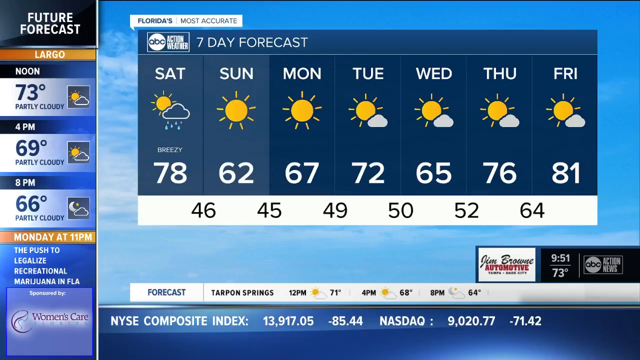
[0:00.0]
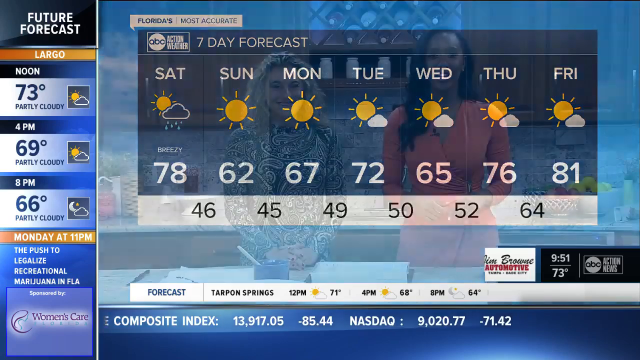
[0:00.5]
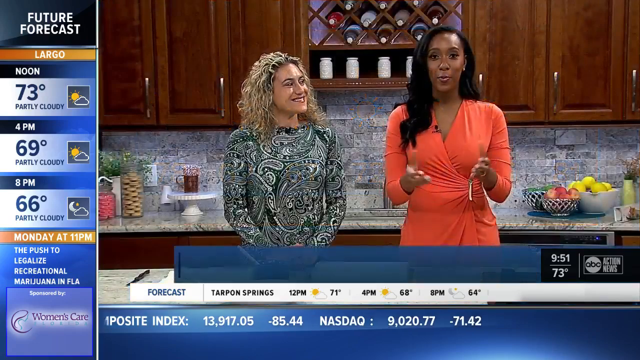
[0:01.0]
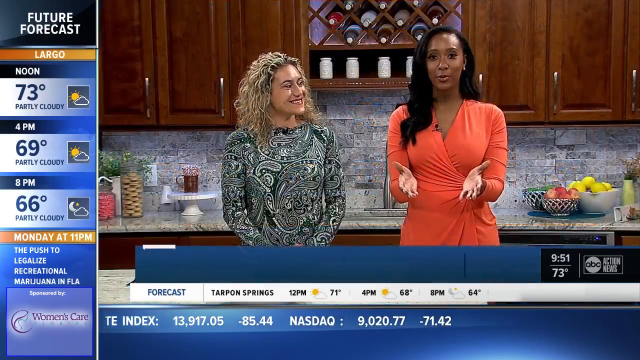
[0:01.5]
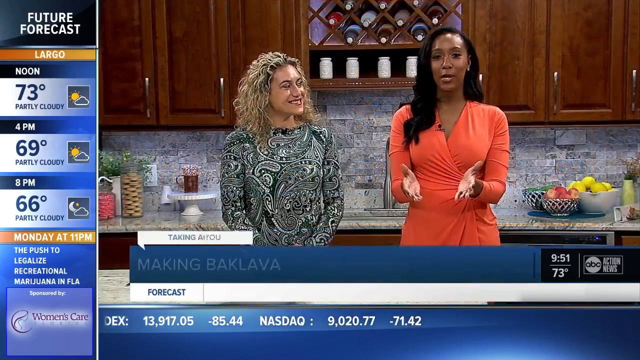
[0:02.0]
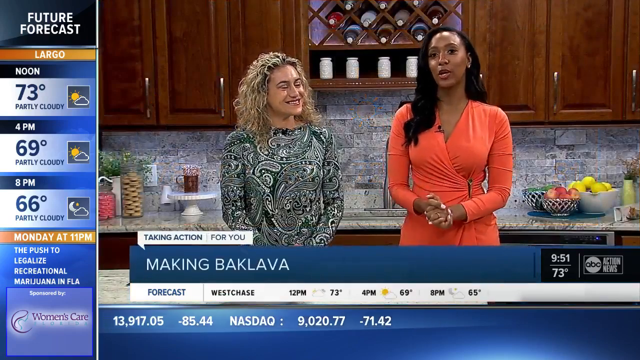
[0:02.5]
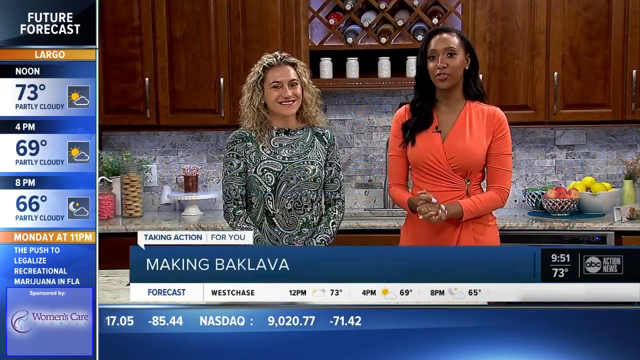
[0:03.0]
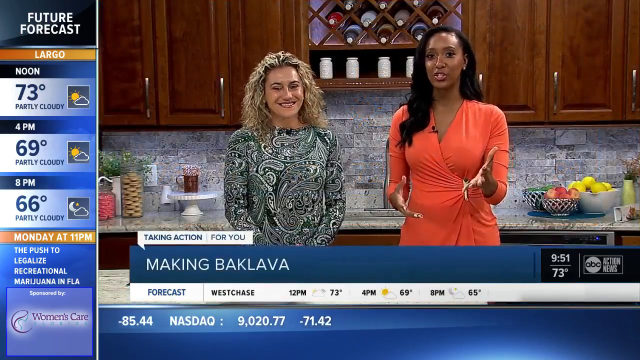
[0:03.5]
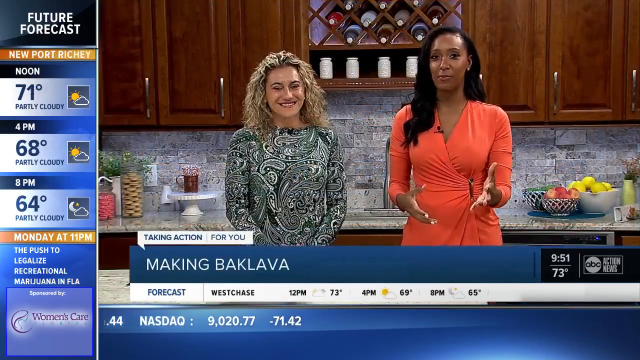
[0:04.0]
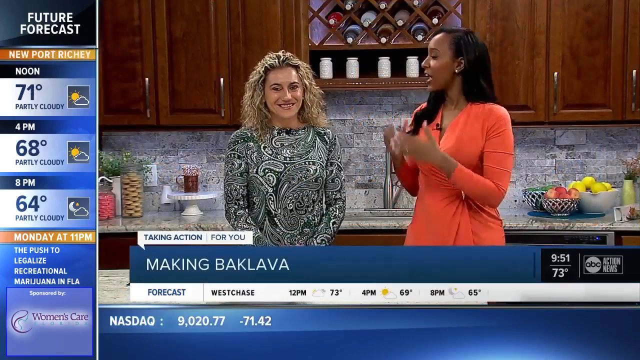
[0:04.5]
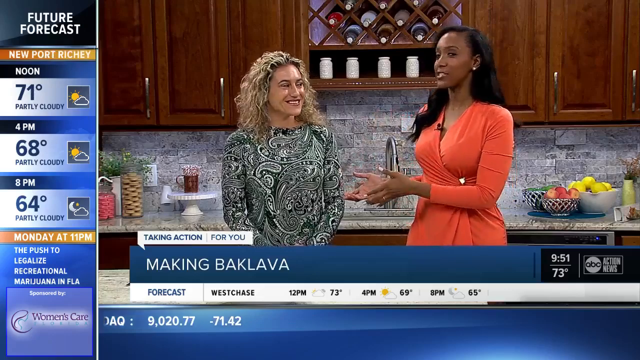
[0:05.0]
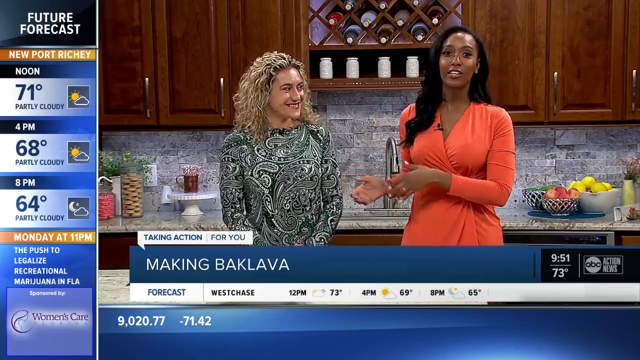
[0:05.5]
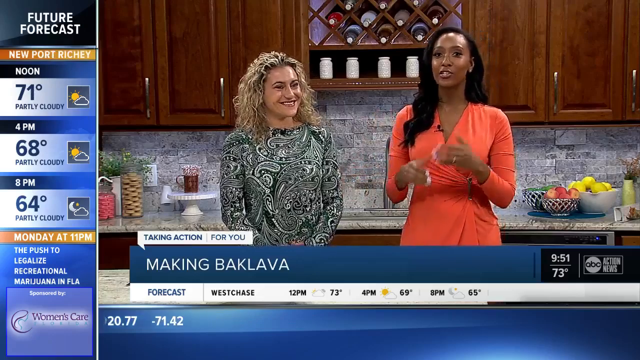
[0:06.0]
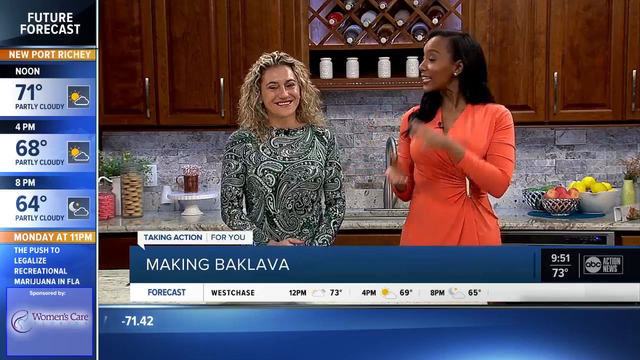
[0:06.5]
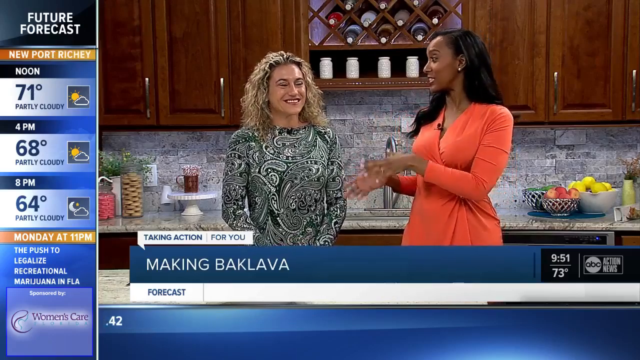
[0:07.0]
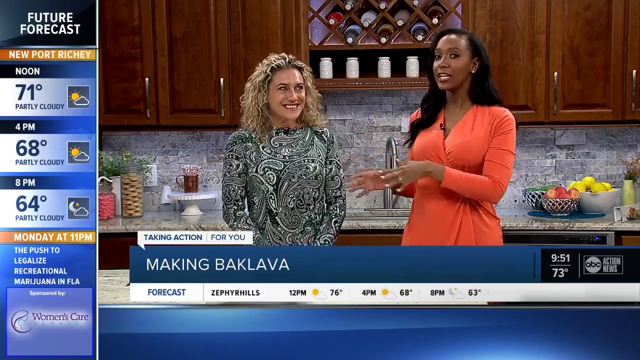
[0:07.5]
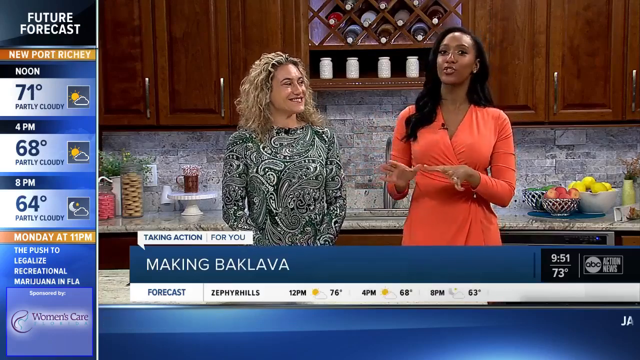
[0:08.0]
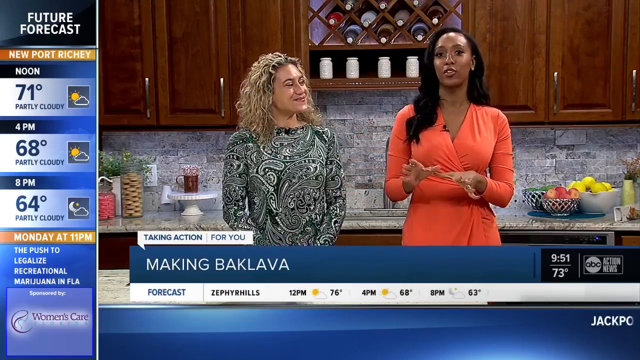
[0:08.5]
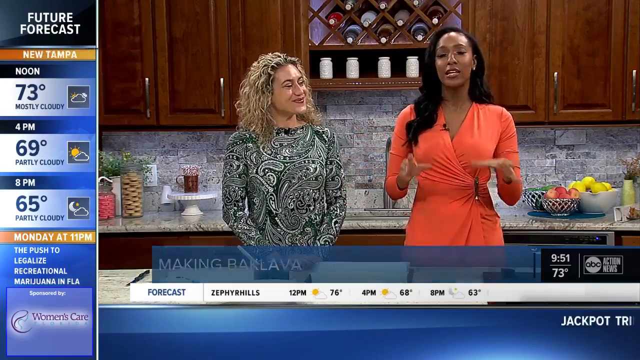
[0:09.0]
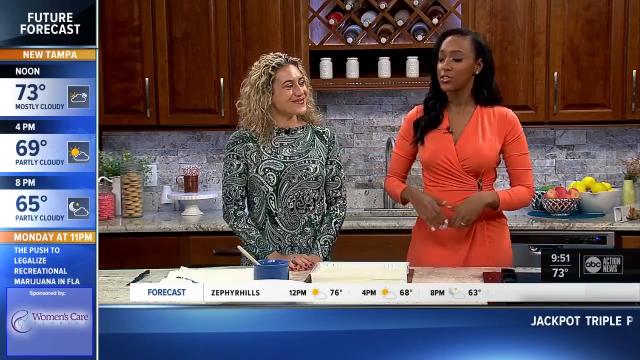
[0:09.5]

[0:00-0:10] A seven-day forecast runs from Saturday to Friday, with small sun icons in the middle of each day and clouds on some of them. Saturday has a rainy cloud and is breezy. Sunday and Monday show just sun. Tuesday, Wednesday, Thursday and Friday each have a small cloud, indicating a bit of overcast. Two women are then seen speaking in a kitchen-type setting; one is African American, and the other's background is unclear. Both wear dresses, and the African American woman speaks vibrantly.